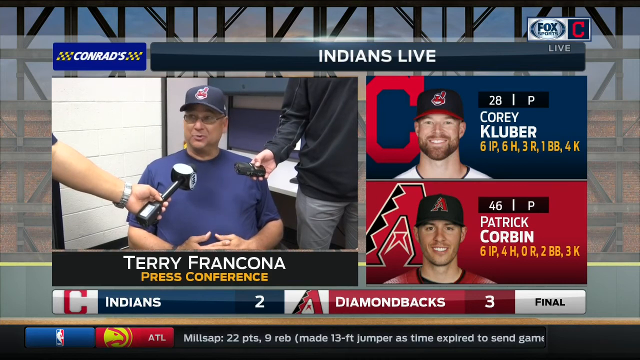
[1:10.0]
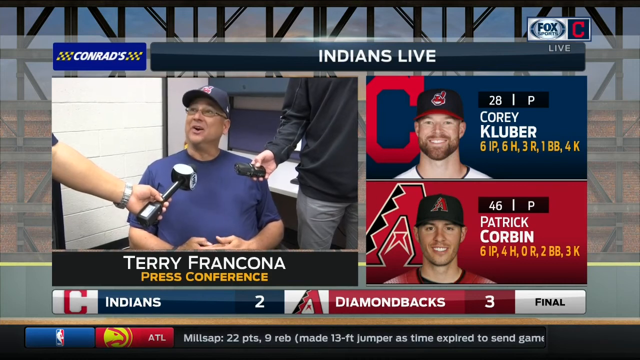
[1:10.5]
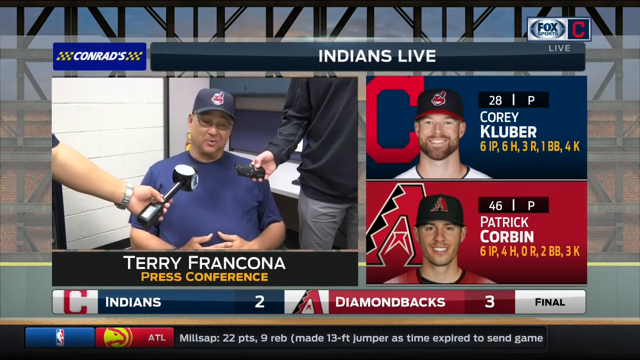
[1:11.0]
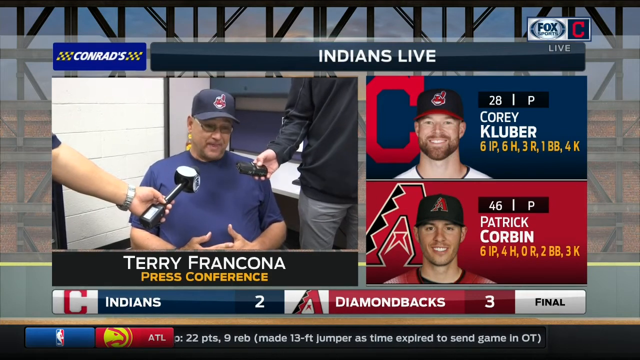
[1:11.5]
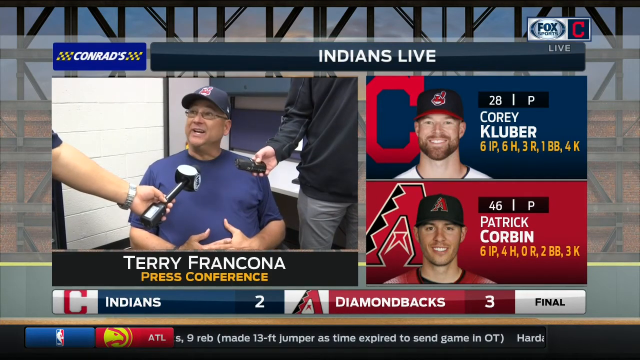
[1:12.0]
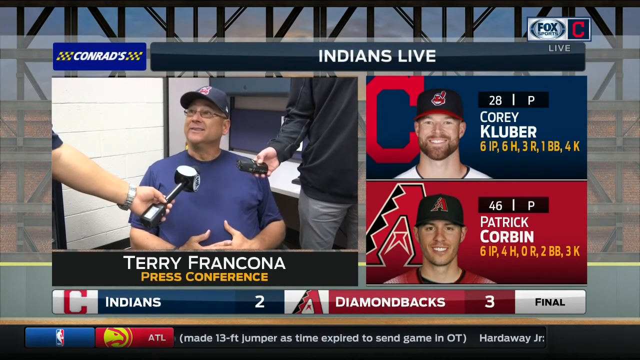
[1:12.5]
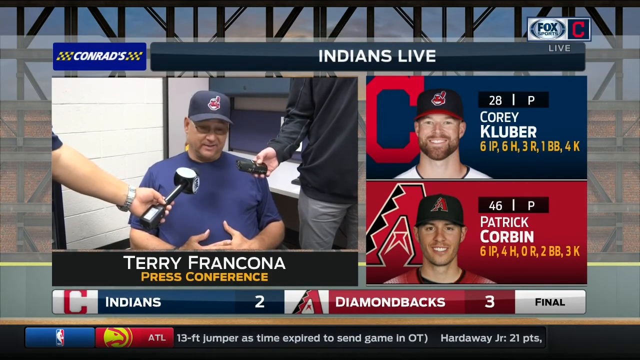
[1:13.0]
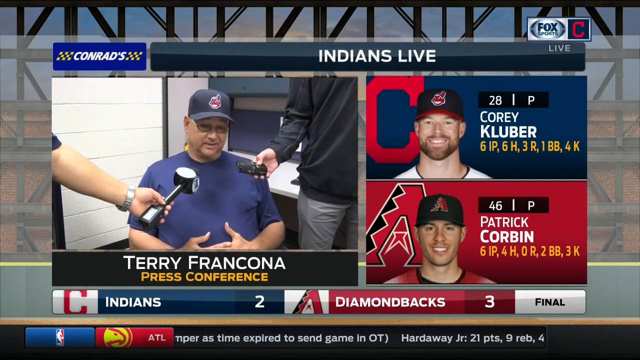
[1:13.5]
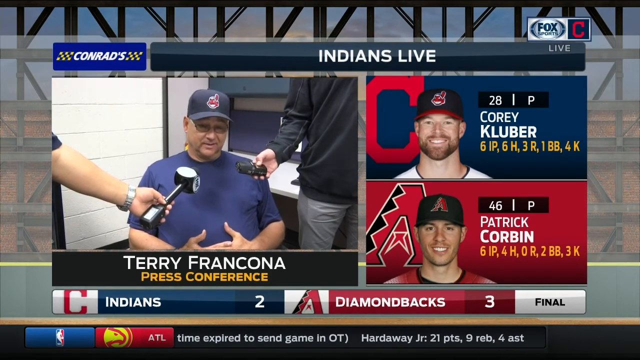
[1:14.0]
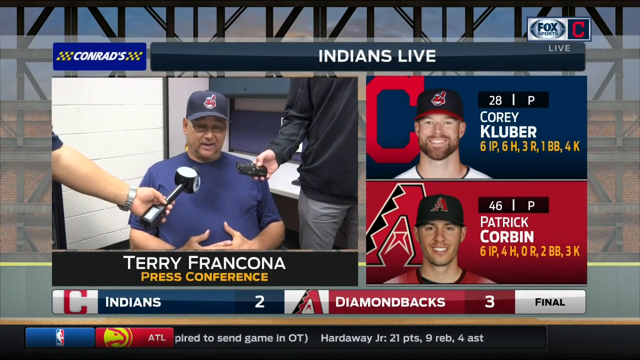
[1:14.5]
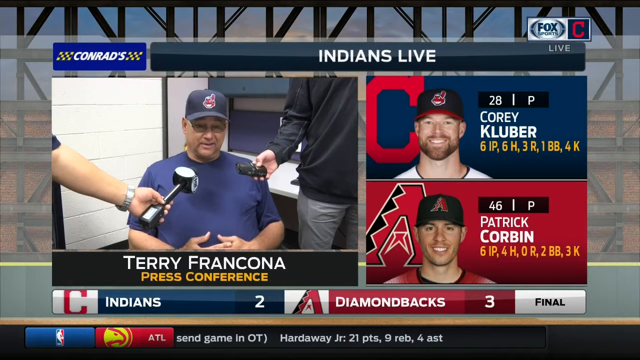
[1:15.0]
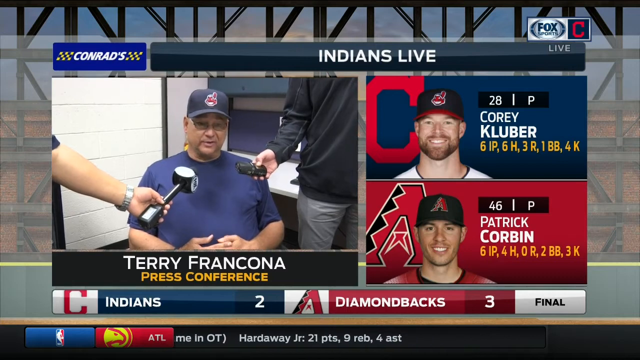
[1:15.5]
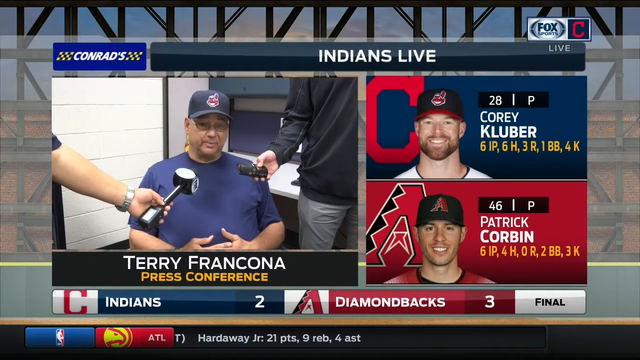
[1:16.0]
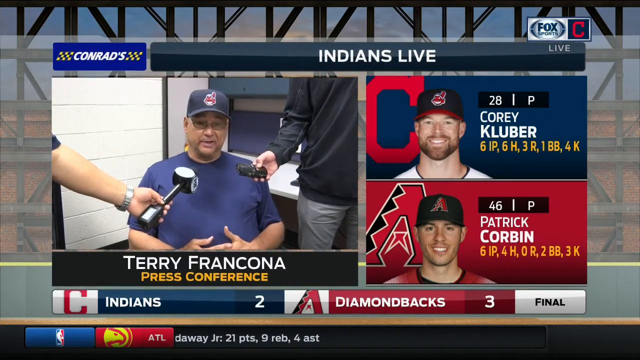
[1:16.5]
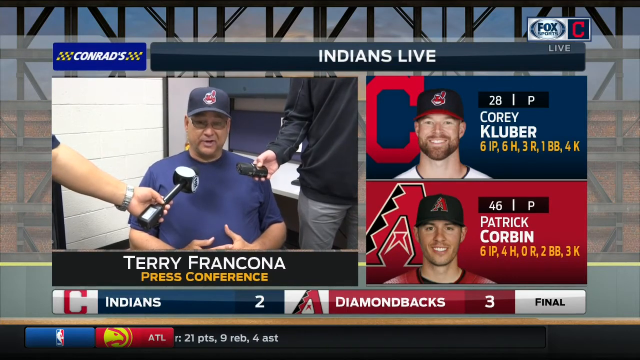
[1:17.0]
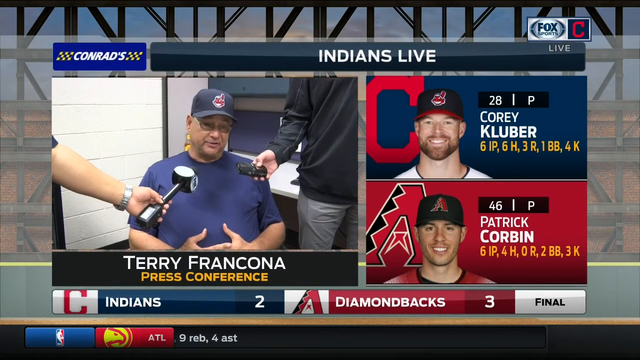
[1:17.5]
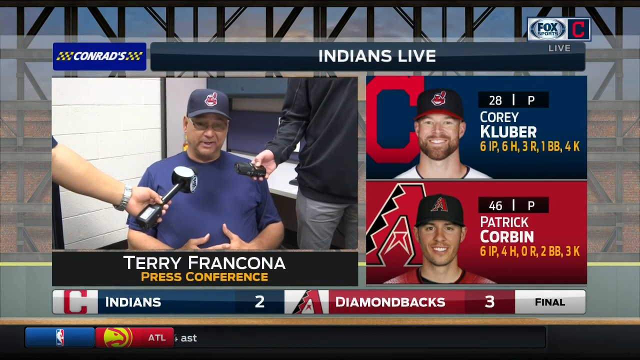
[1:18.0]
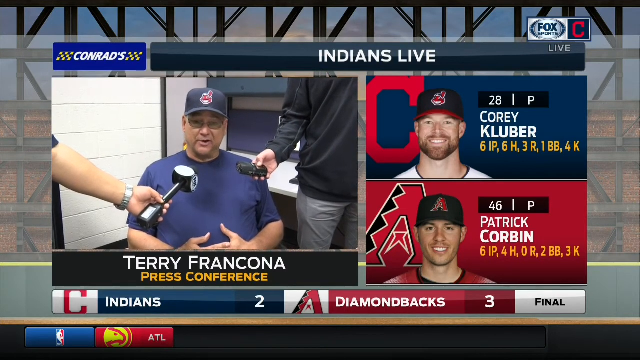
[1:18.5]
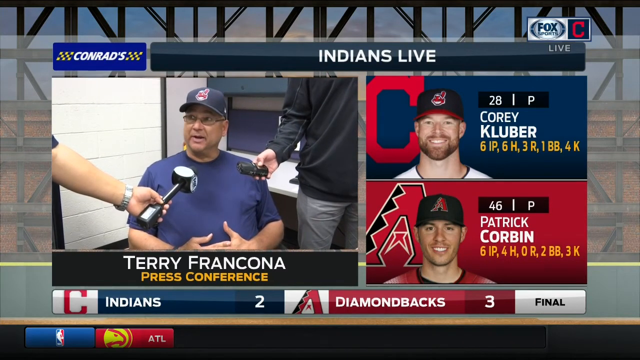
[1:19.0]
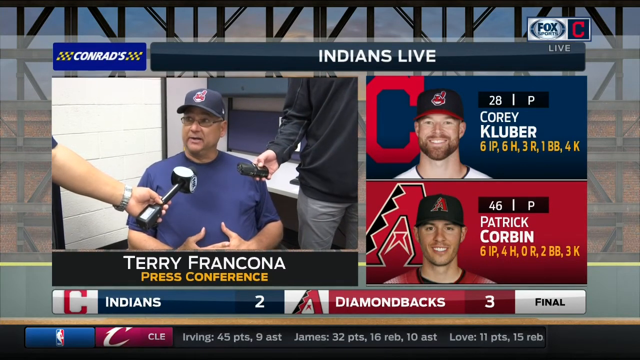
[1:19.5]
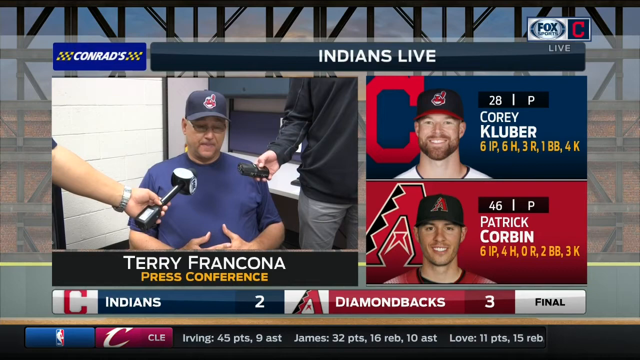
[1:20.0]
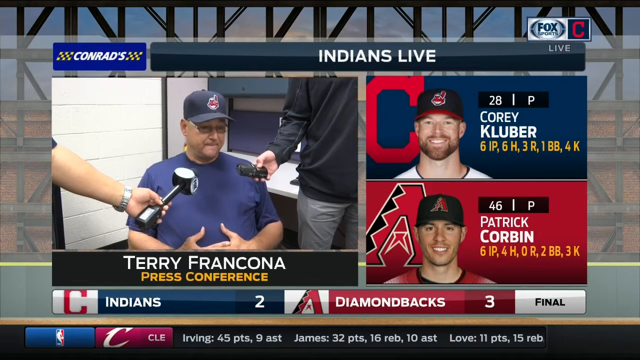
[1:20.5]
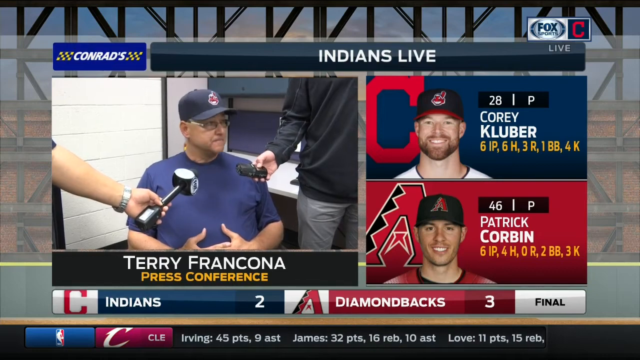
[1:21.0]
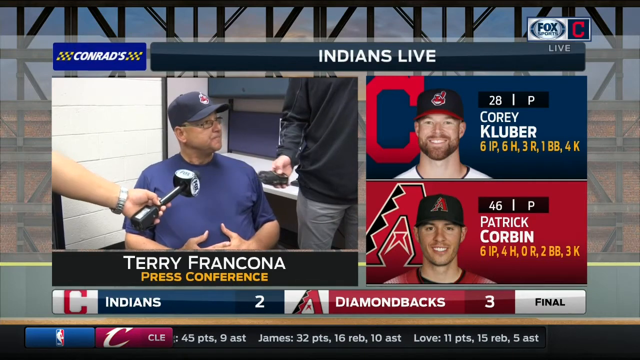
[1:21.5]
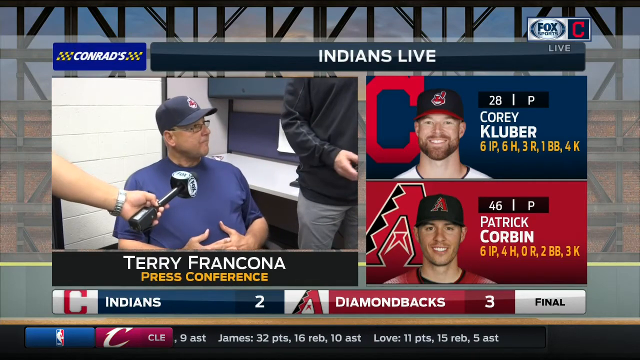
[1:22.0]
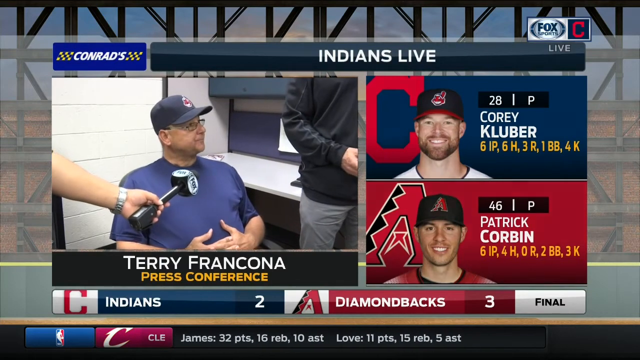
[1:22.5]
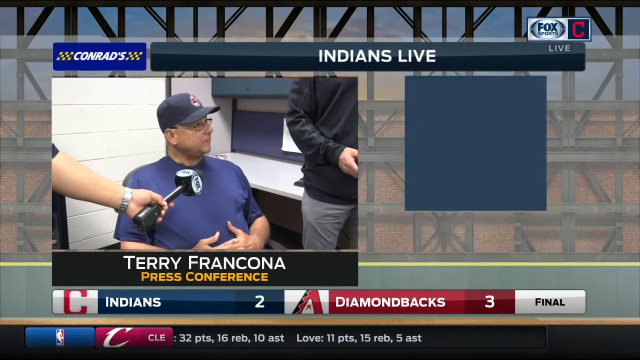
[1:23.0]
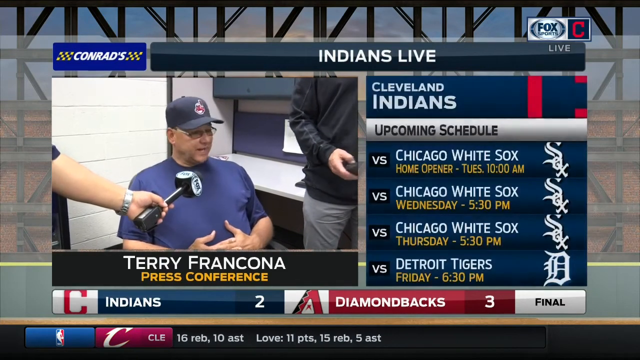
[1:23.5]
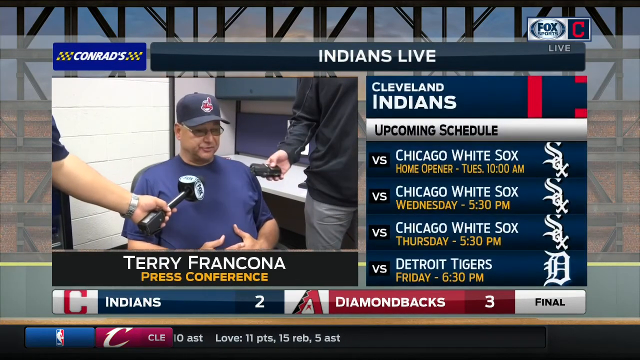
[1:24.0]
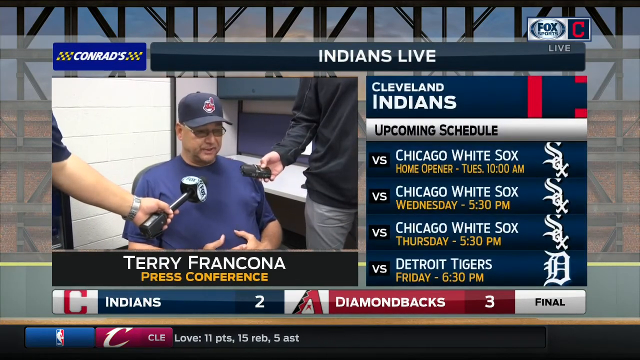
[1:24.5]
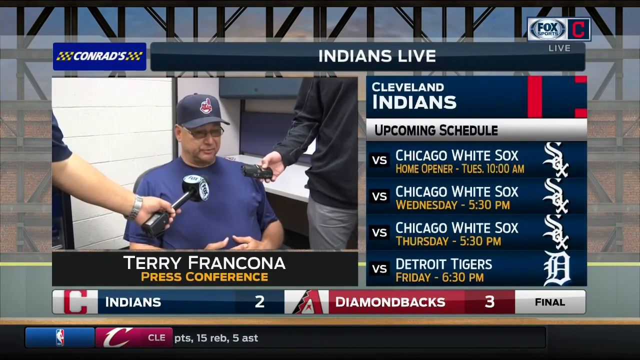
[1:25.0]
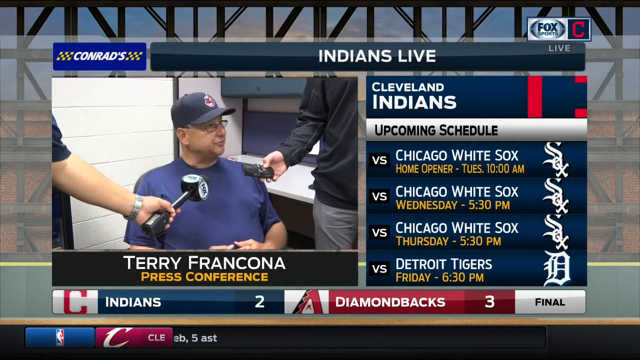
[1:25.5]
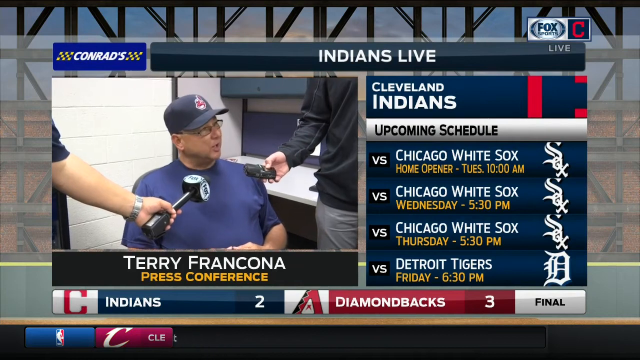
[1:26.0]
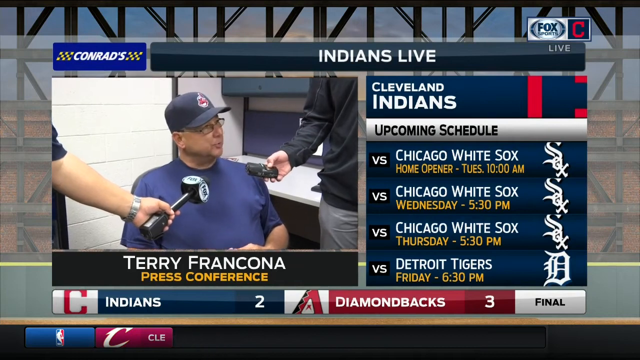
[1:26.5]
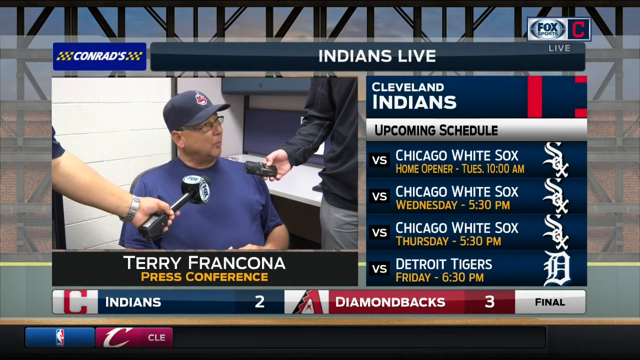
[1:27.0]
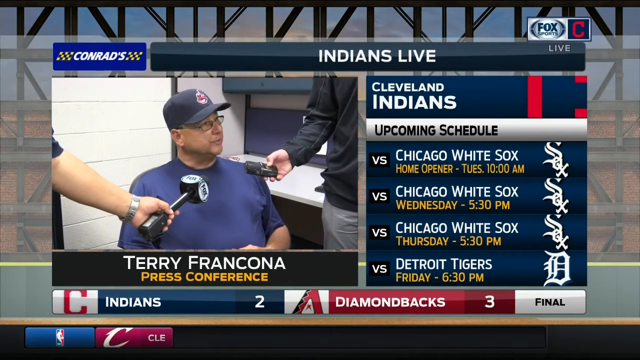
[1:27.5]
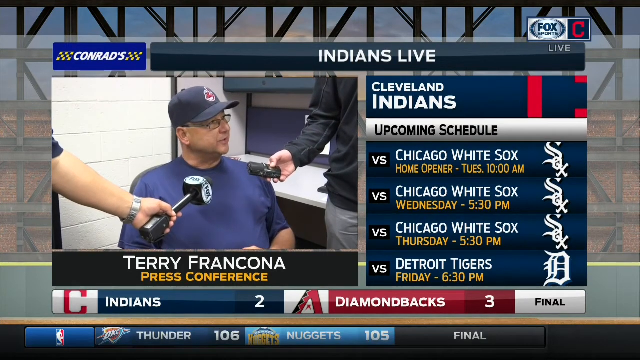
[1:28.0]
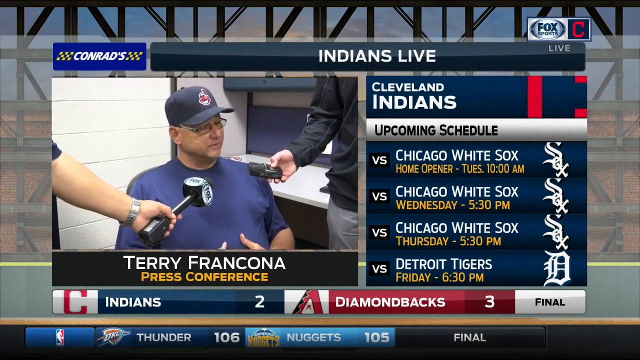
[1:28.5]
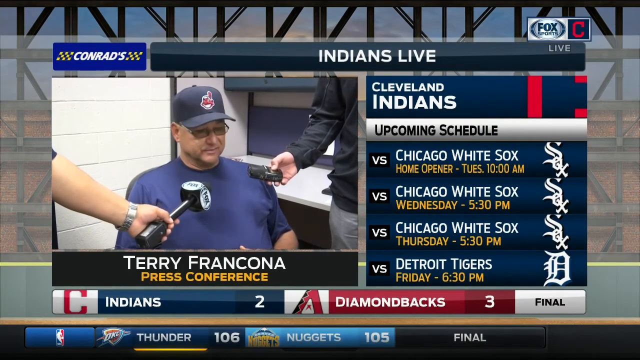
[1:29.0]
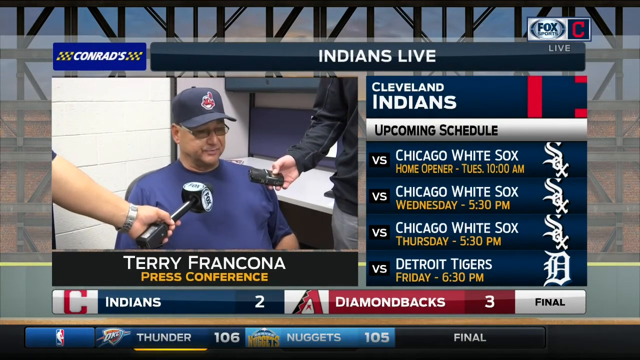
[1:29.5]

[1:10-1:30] The two starting pitchers from the Cleveland Indians' game against the Diamondbacks, which the Diamondbacks won 3-2, are compared: Indians starter Corey Kluber pitched six innings, gave up six hits, three runs, and a base on balls, and had four strikeouts; Diamondbacks pitcher Patrick Corbin also pitched six innings, gave up four hits and zero runs, walked two, and had three strikeouts. Indians manager Terry Francona is interviewed in a chair with reporters standing on either side of him. He looks up at the reporter to the left, looks down, looks up while talking, and looks up again. He then looks at the other reporter, who takes the microphone away and puts it back, apparently having asked a question. The Cleveland Indians' upcoming schedule then appears: the "home opener" on Tuesday at 10 against the Chicago White Sox, then Wednesday at 5:30 and Thursday at 5:30 against the Chicago White Sox, and Friday at 6:30 against the Detroit Tigers.